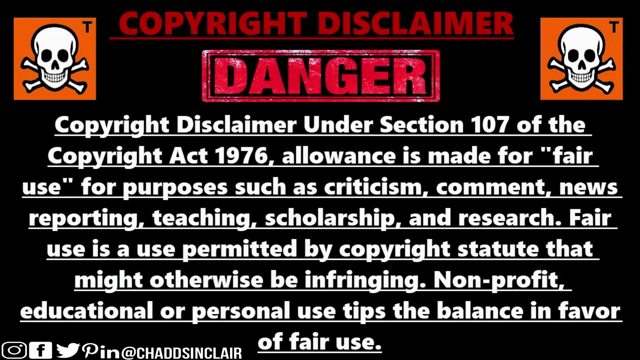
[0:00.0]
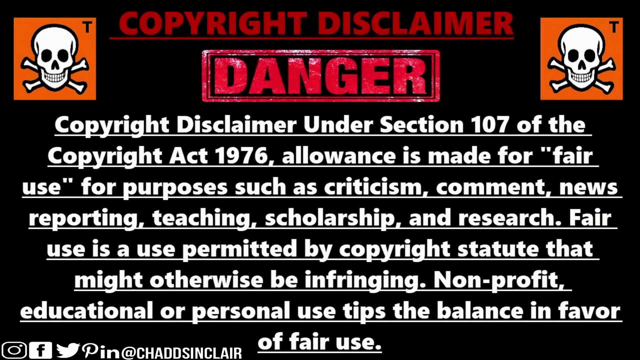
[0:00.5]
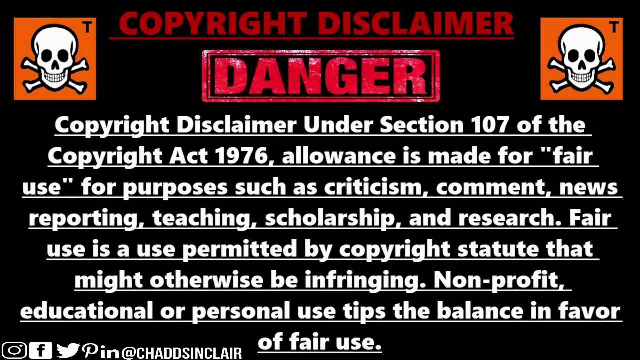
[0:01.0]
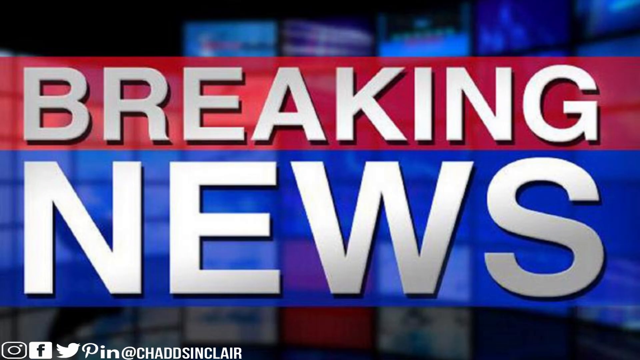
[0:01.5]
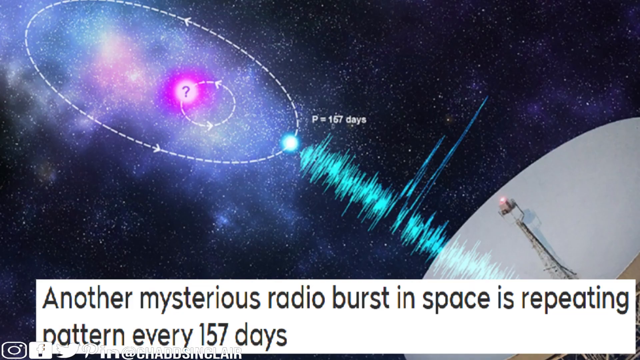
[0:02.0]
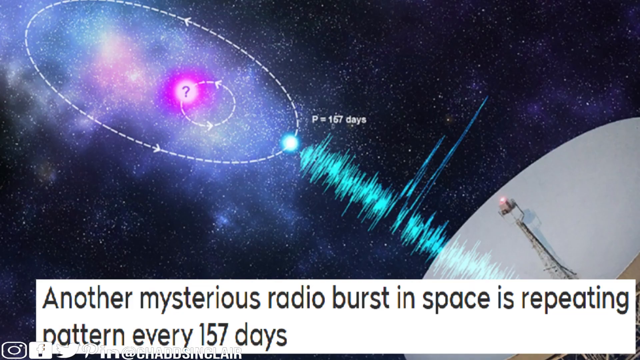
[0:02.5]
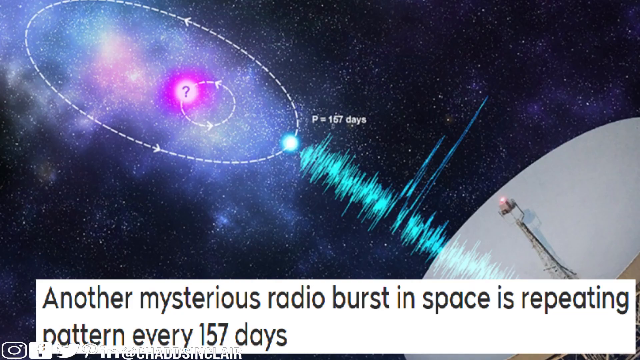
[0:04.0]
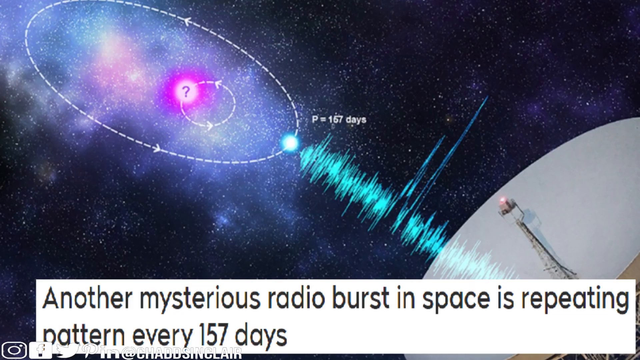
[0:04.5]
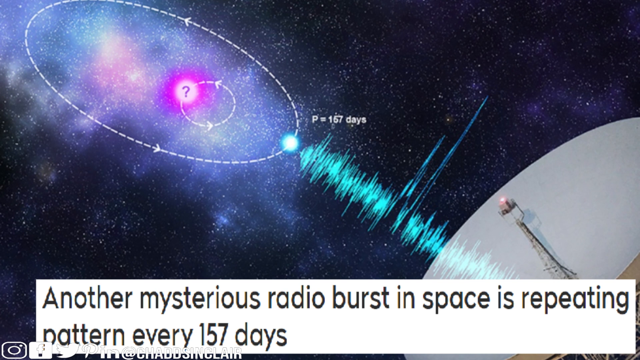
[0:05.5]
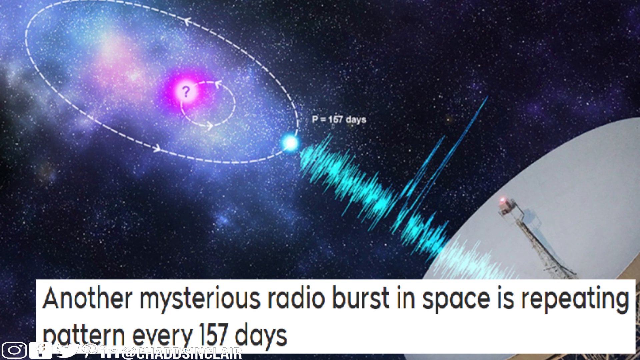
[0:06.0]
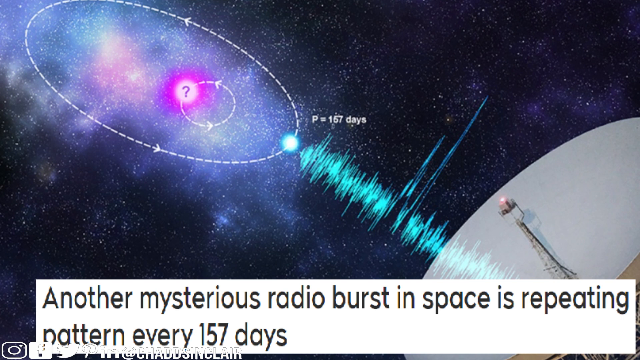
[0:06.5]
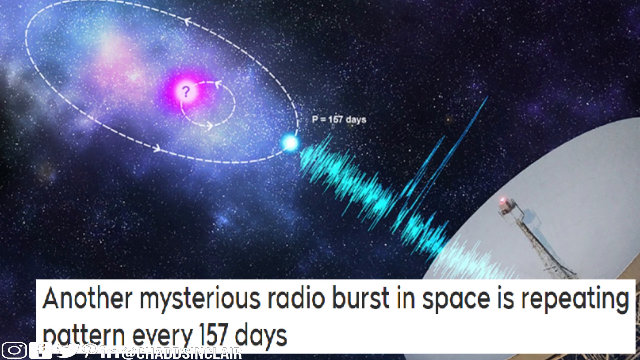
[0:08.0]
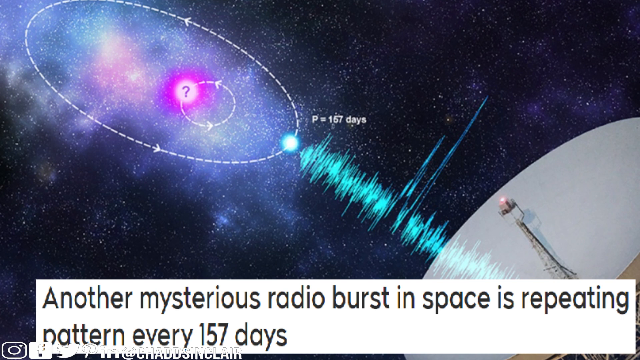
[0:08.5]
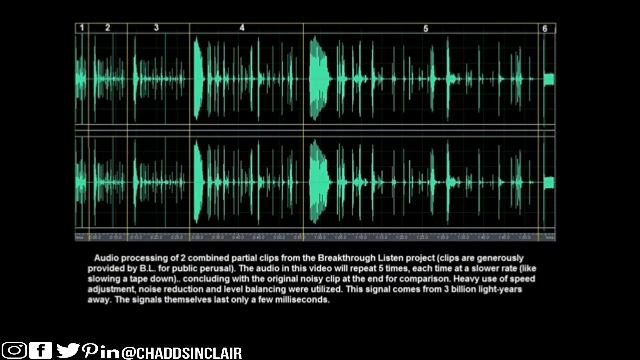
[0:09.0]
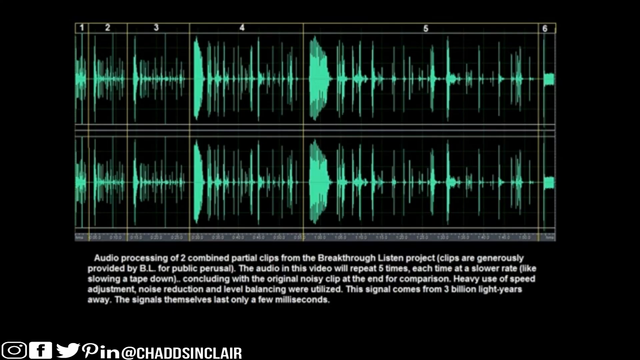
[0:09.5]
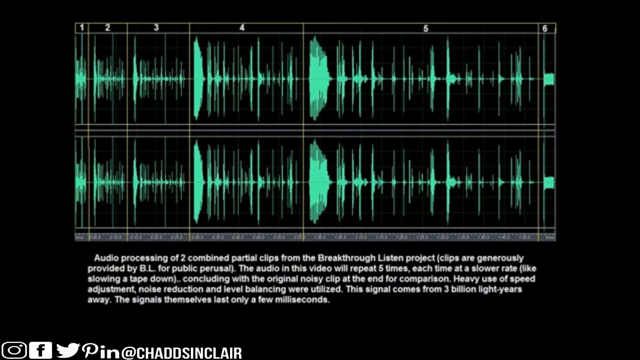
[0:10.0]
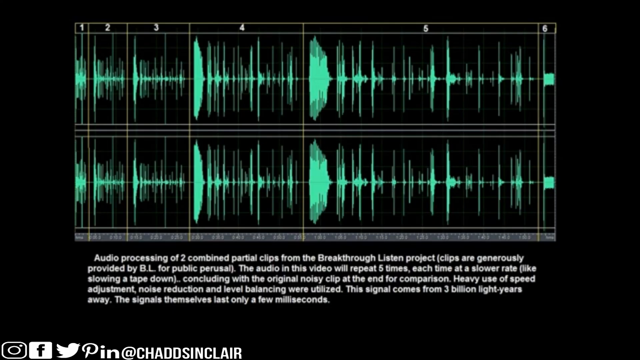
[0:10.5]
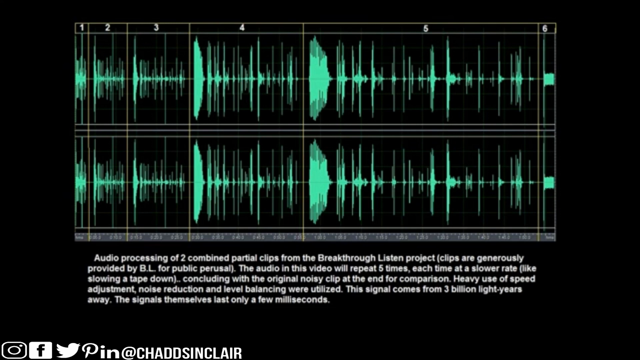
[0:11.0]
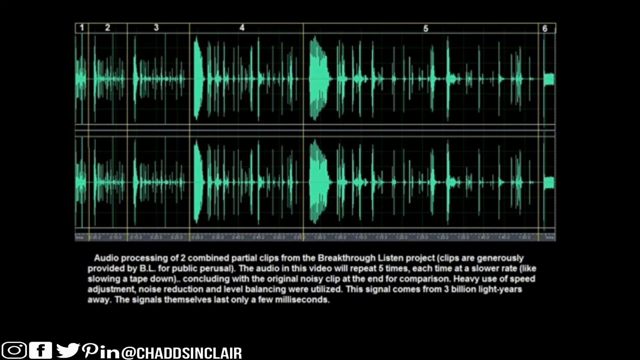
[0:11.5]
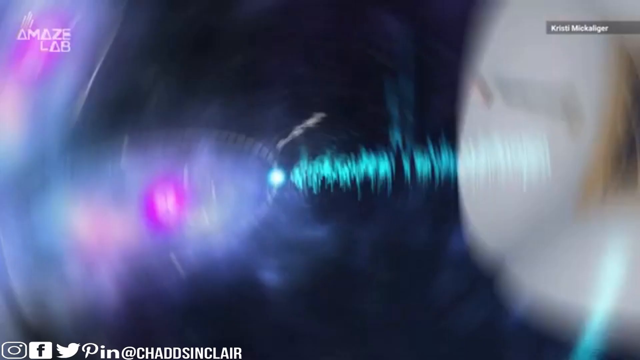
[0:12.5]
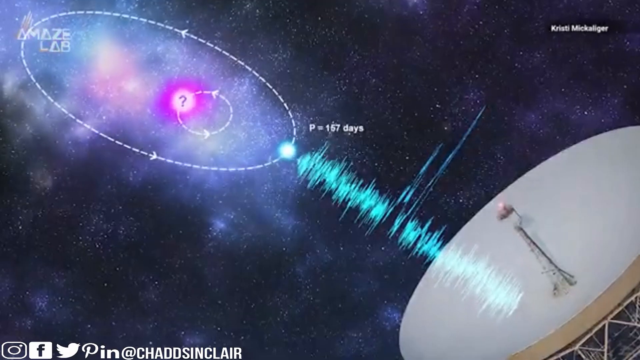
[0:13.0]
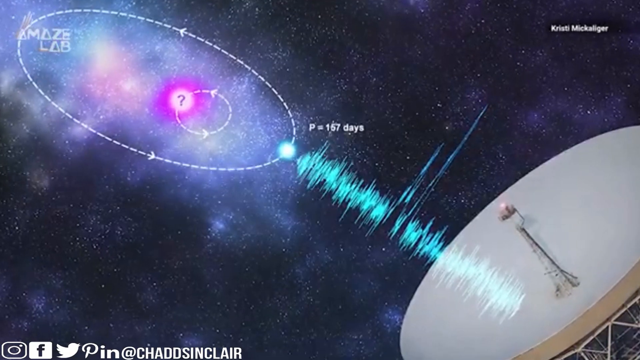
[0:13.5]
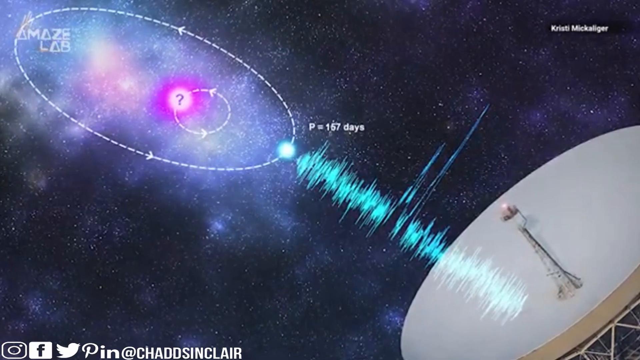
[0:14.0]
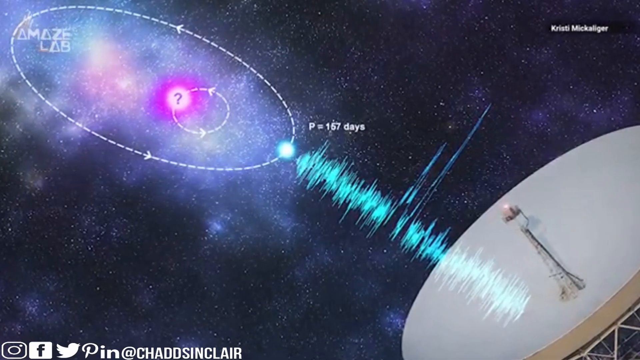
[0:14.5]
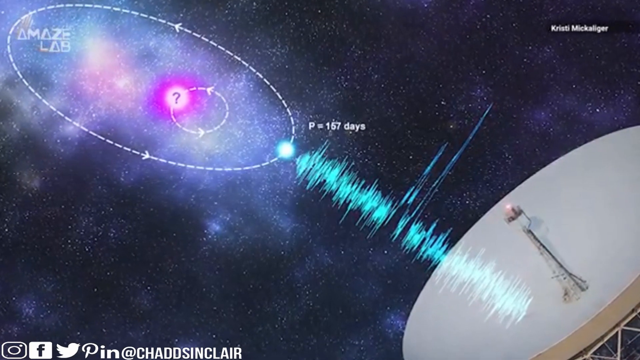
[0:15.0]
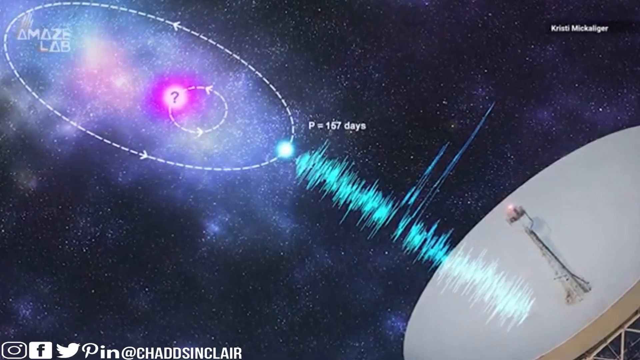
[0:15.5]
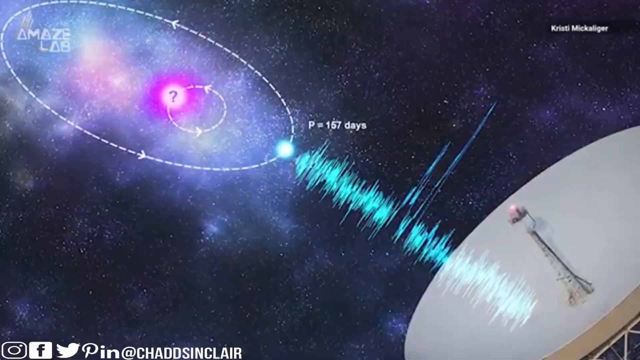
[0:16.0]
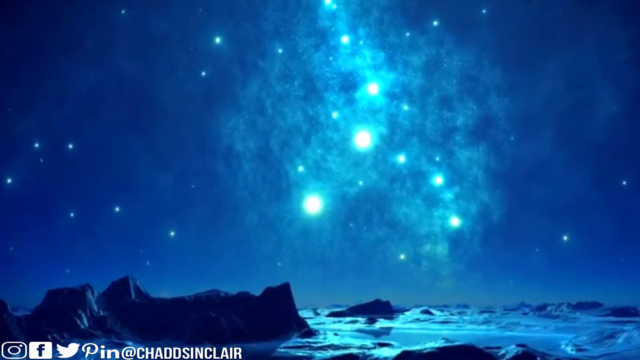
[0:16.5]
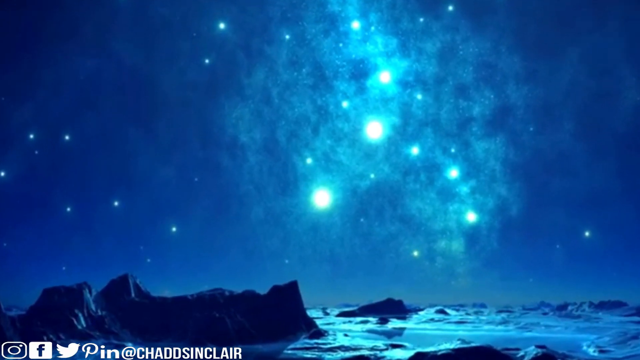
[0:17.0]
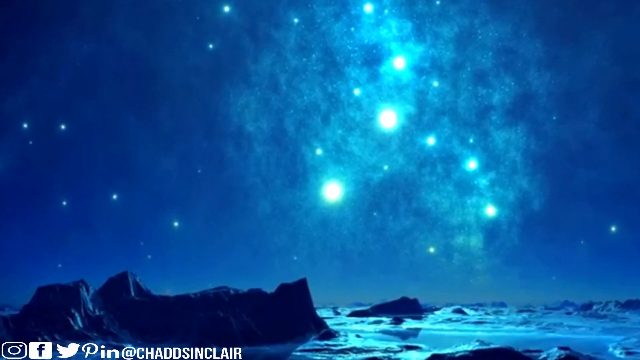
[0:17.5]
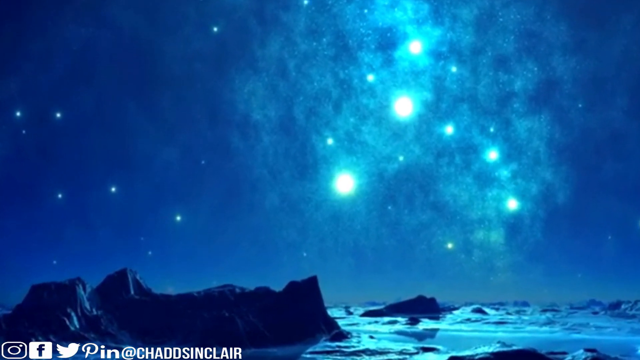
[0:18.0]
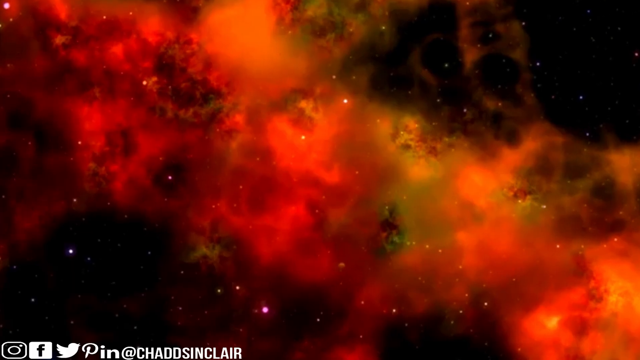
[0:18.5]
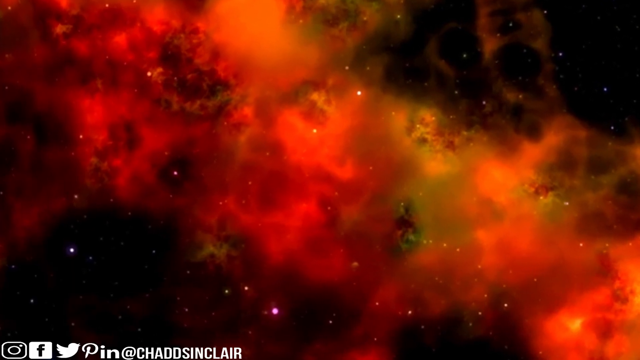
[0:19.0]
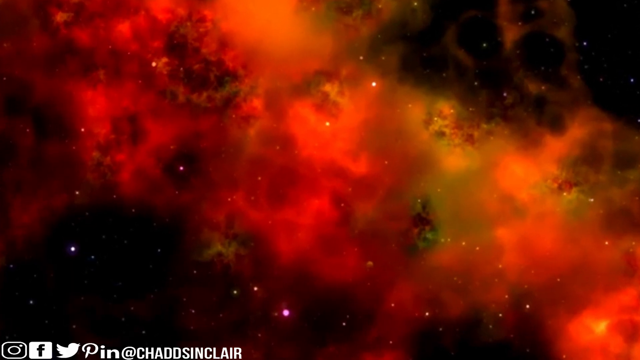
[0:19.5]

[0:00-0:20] The background is black, with matching burnt-orange squares, each with a black T in its upper right corner and a black-and-white skull-and-bones image in the middle. Between them, at the top in the middle, red text reads "copyright disclaimer", and underneath it says "danger". White text follows: "copyright disclaimer under section 107 of the Copyright Act of 1976", with "fair use" in quotation marks, continuing "purposes such as criticism, comment, news, report and teaching, scholarship and research. Fair use is a use permitted by copyright statute that might otherwise be infringing" and "non-profit, educational", ending "personal use tips the balance in favor." Next, "breaking news" appears in white, and "another mysterious radio burst in space is repeating" appears in black. Two sets of green waves then appear at the top on a black background, with white text underneath: "audio processing of two combined partial clips on the breakthrough listen subject", a parenthetical beginning "generously provided by B.L.", then "(the audio in this video will repeat five times. Each time at a slower rate (like slowing the tape down))", "concluding with a visual noisy clip at the end of the comparison. Heavy use of speed adjustment, noise reduction and level balances were utilized. This signal comes from three billion light-years away. The signals themselves last only a few milliseconds."